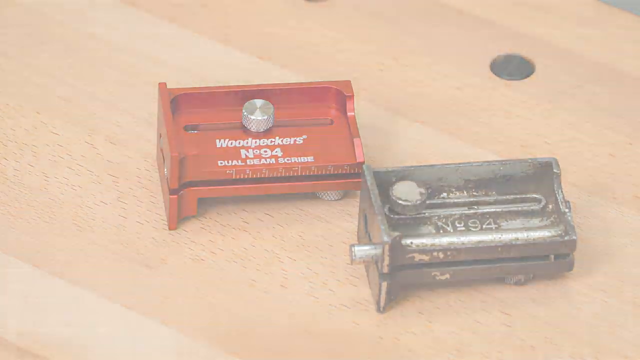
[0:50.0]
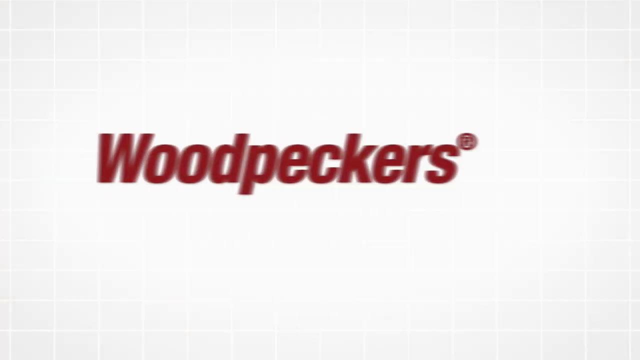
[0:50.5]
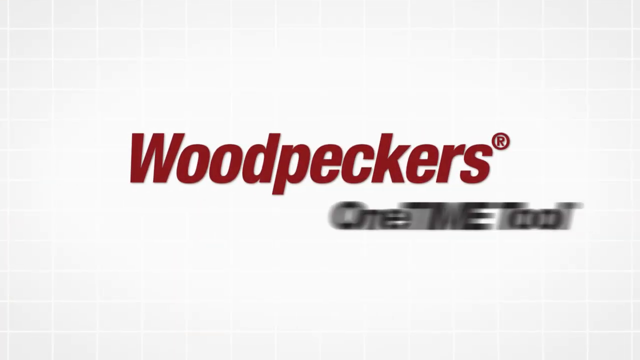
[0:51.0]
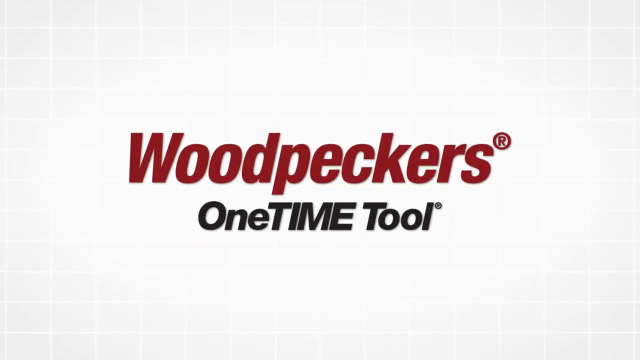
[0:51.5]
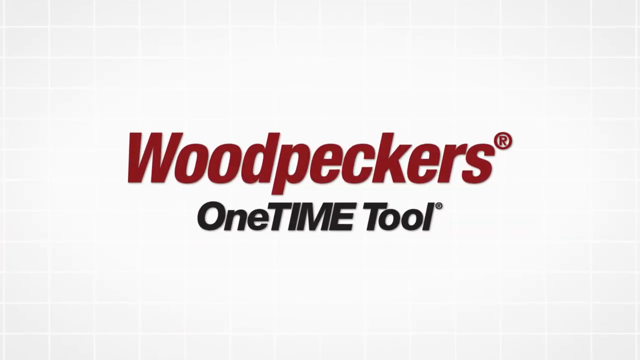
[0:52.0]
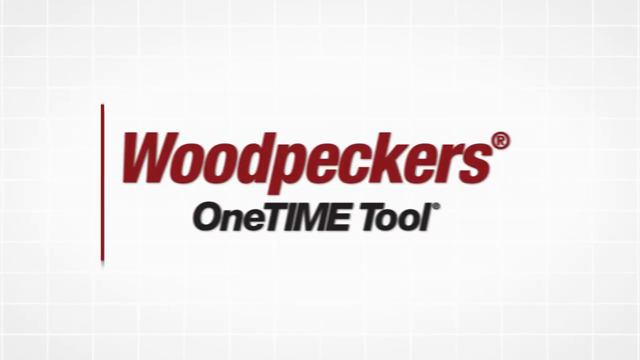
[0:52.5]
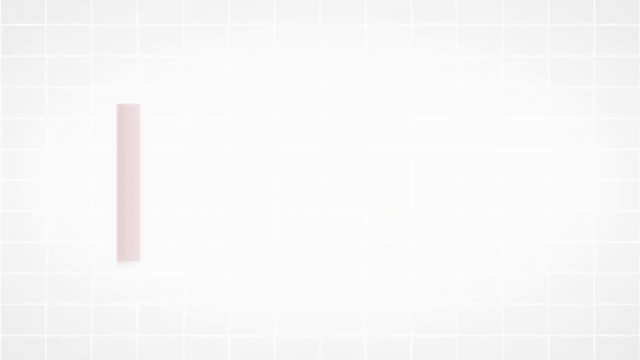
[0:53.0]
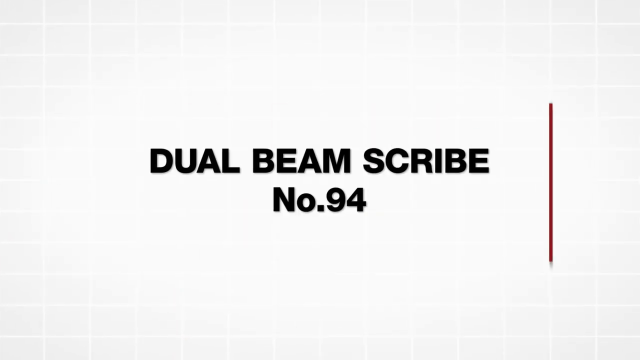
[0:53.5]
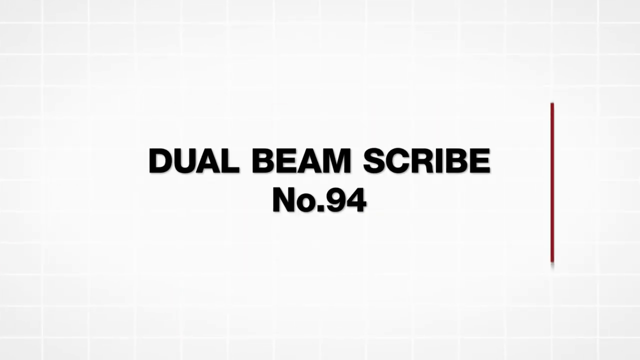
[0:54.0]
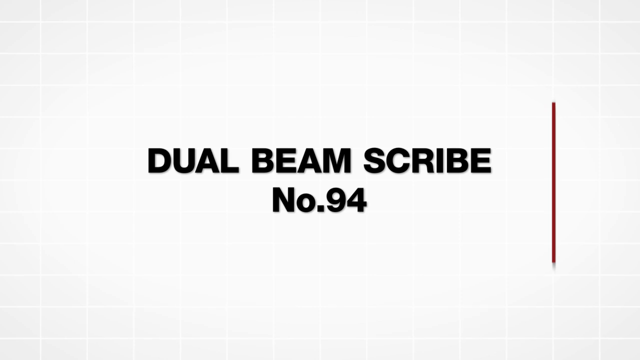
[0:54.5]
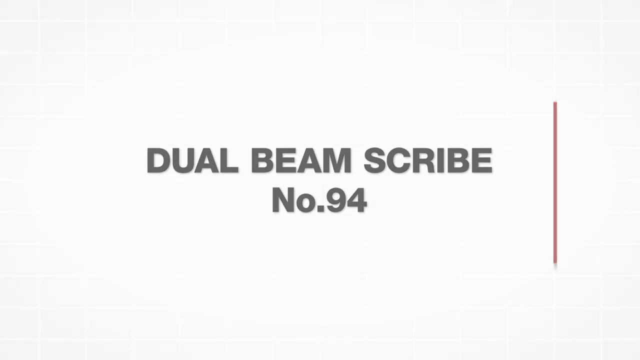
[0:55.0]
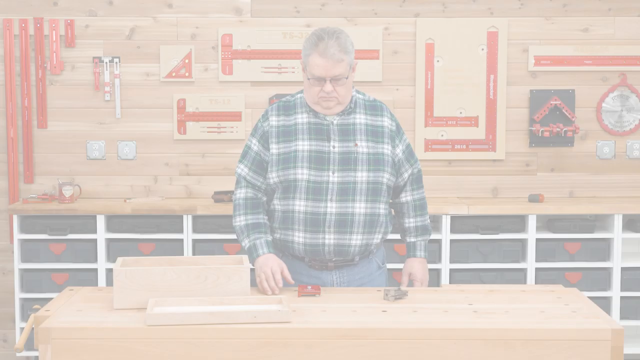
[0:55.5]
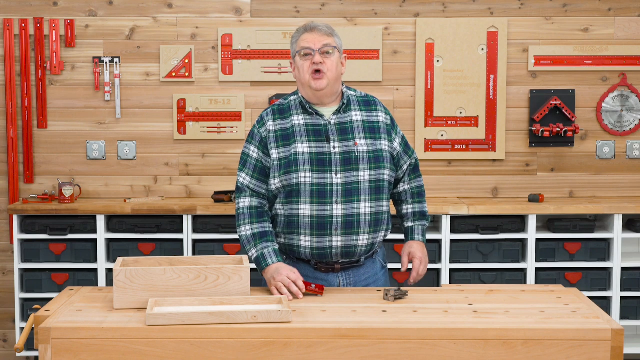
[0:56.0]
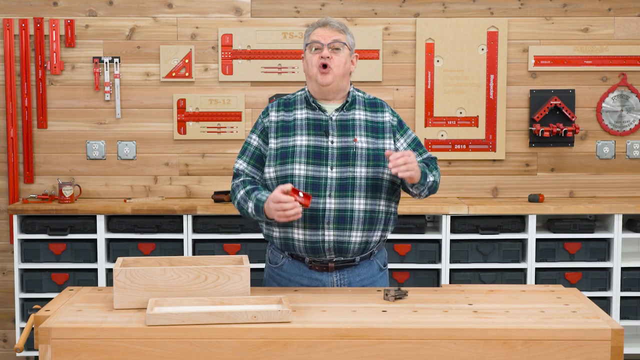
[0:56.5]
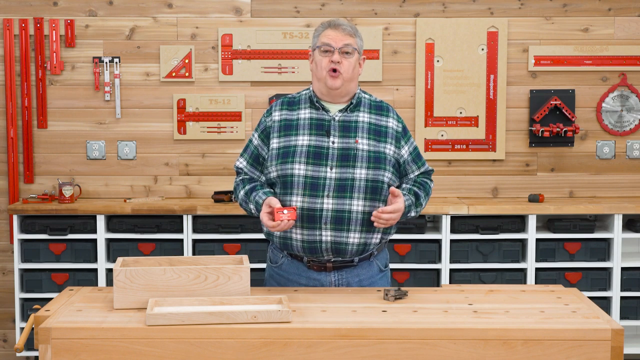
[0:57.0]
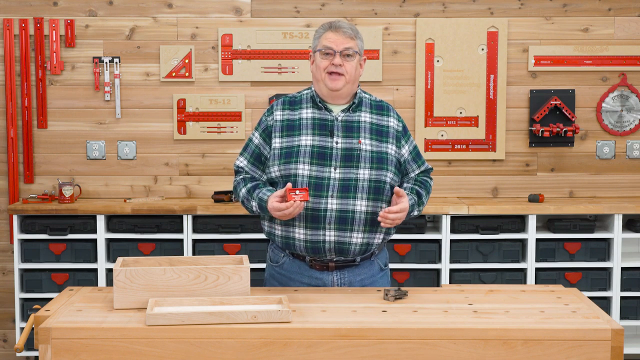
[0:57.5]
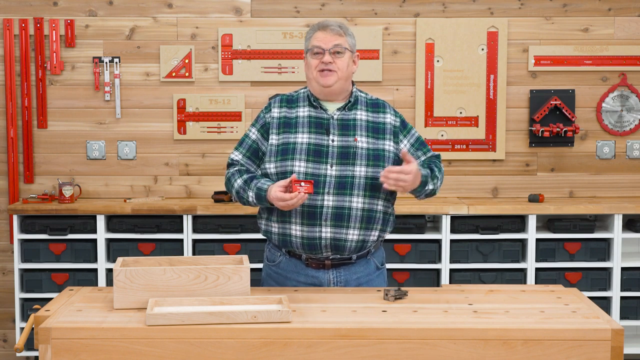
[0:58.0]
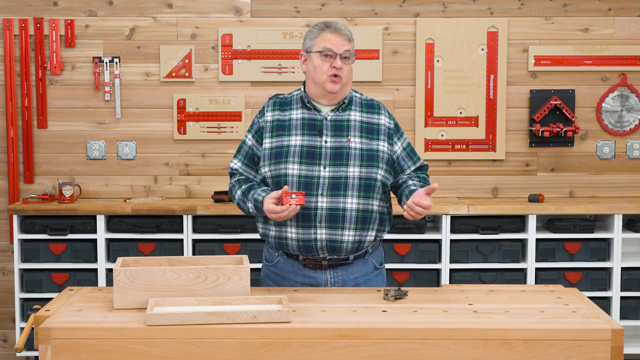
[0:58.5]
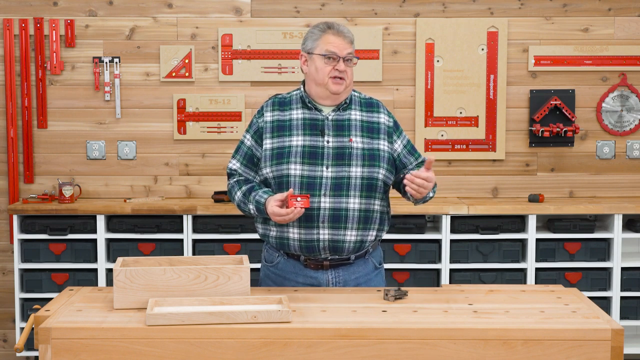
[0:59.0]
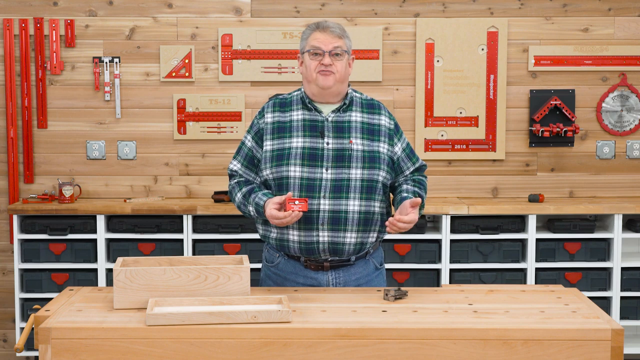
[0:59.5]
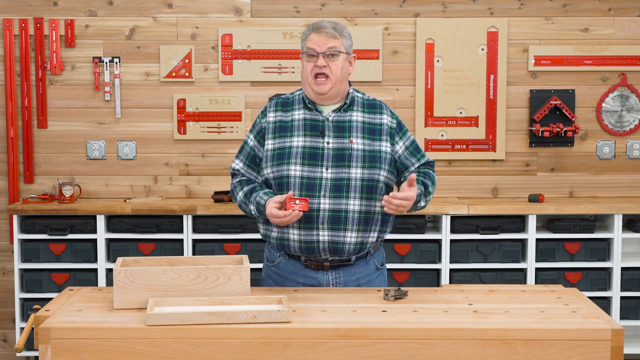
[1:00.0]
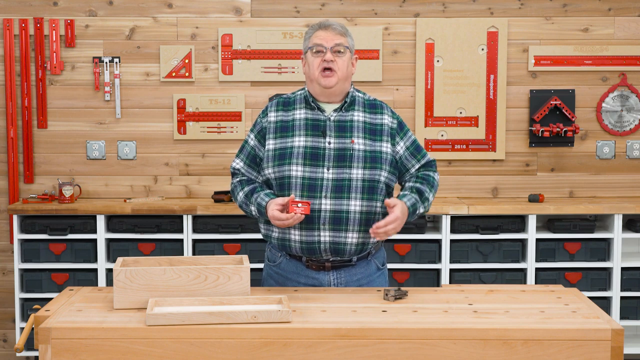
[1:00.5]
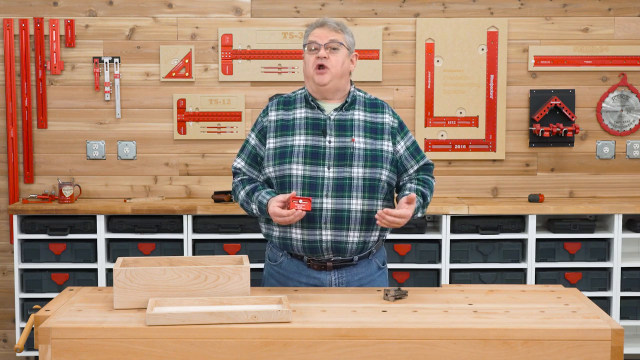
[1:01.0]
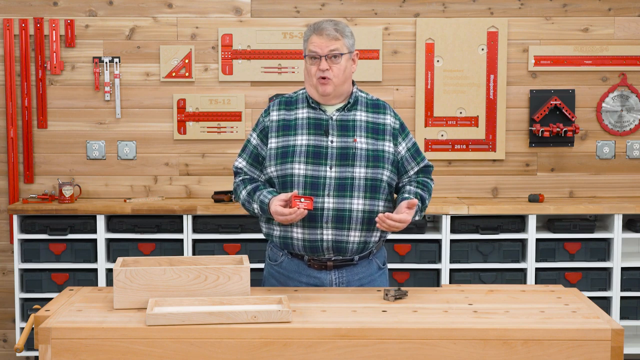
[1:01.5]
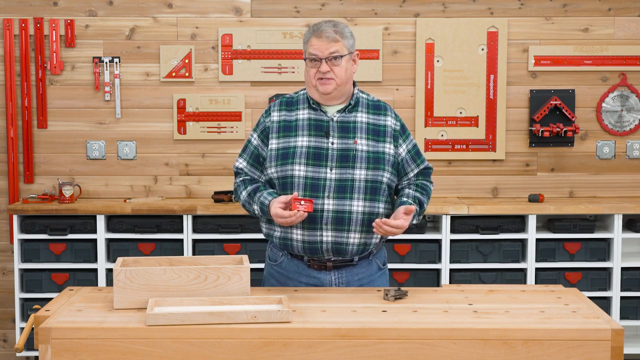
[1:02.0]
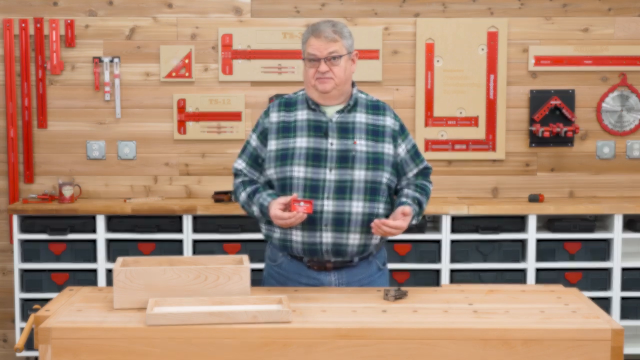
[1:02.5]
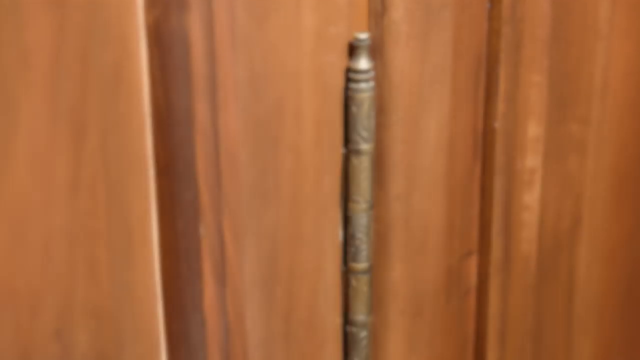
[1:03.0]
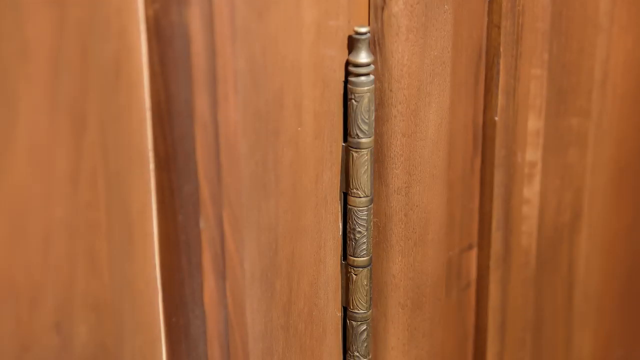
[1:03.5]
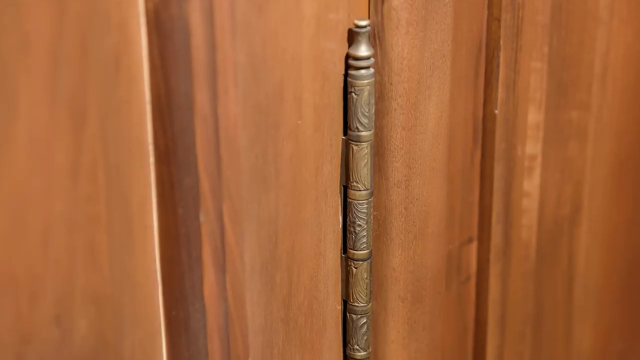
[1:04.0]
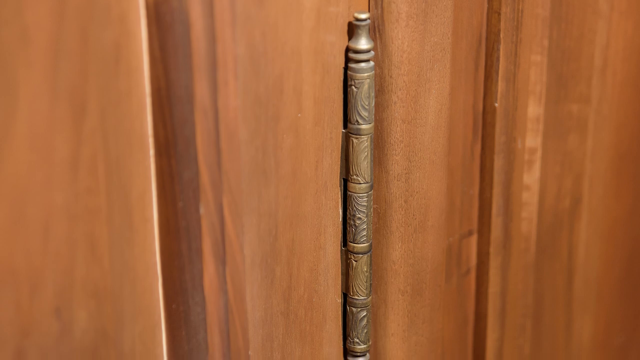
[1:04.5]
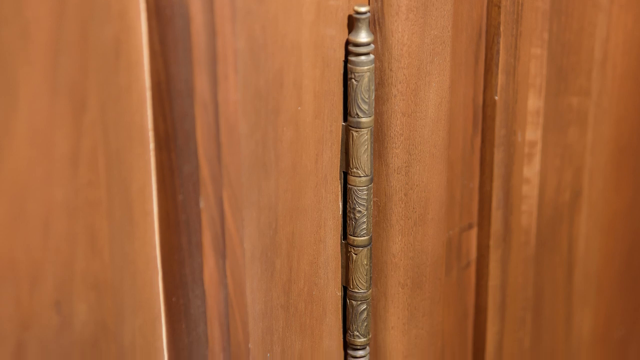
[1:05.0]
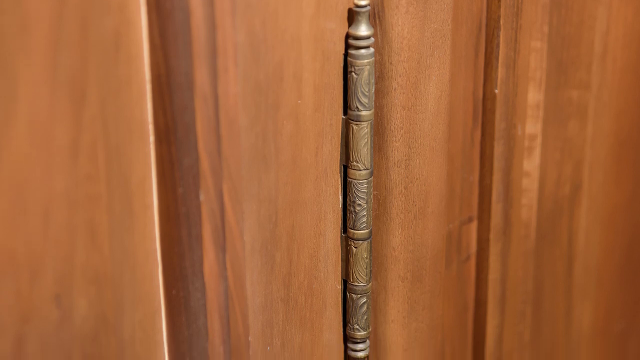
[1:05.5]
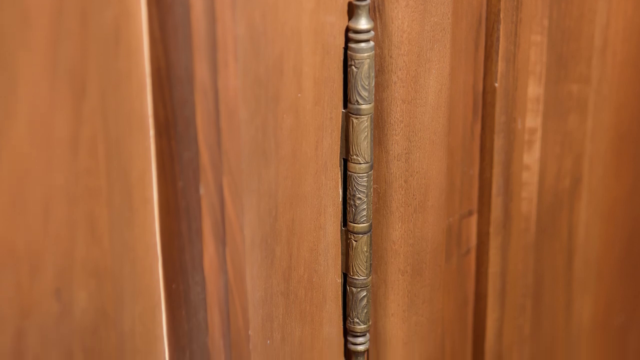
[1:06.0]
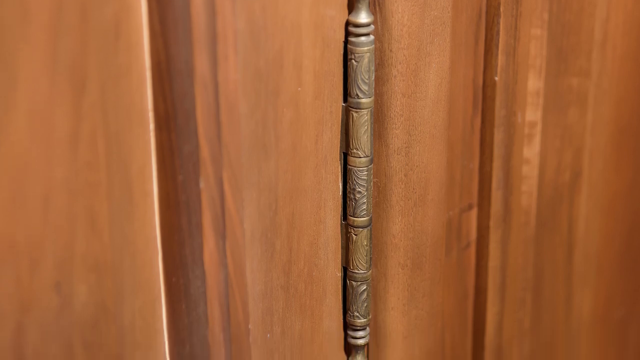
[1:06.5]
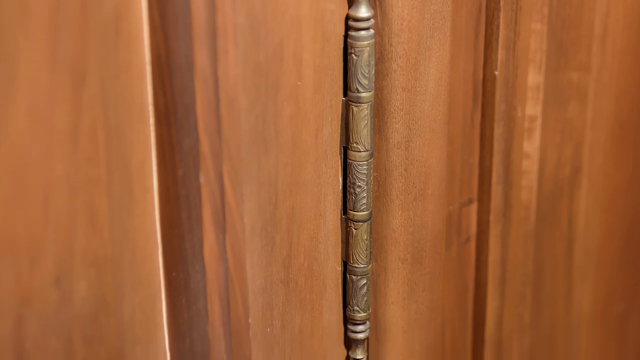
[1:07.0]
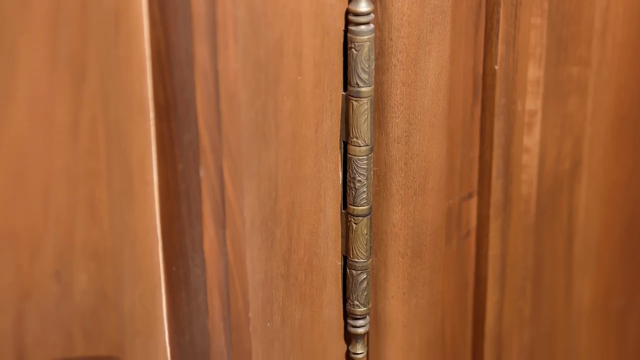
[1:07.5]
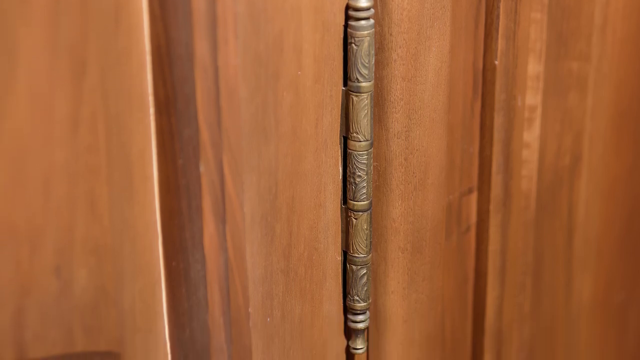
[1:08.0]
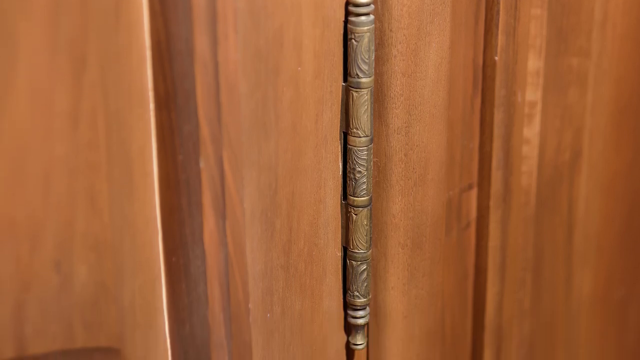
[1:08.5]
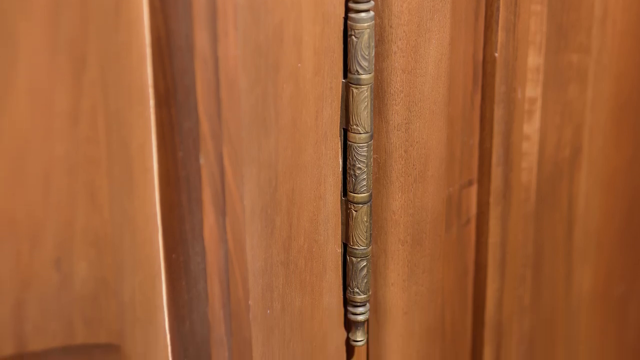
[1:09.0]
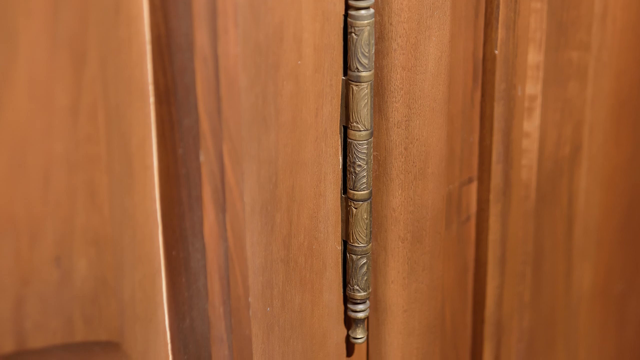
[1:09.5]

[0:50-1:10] The man shows an old-fashioned-looking object resembling part of a pencil sharpener, marked "number 94", and a very similar red one taken out of a box that says "woodpeckers number 94 dual beam scribe". The text then reads "woodpeckers one-time tool", and "dual beam scribe number 94". He picks up the tool and holds it in his hands. He then shows a decorative, old-fashioned hinge that looks like brass, with each part carved, giving it a Victorian look.